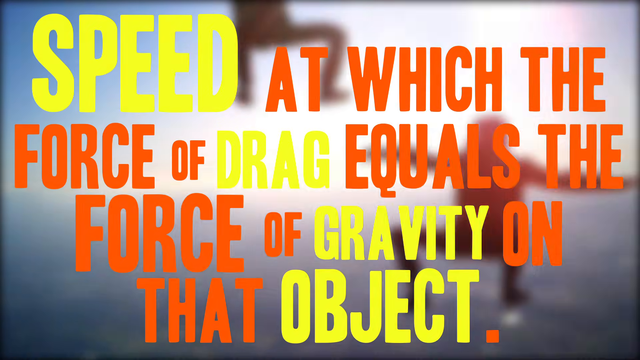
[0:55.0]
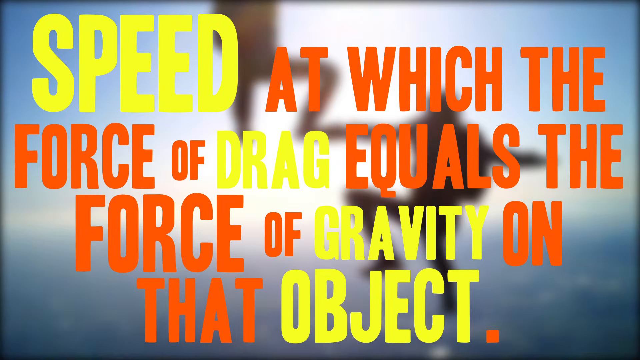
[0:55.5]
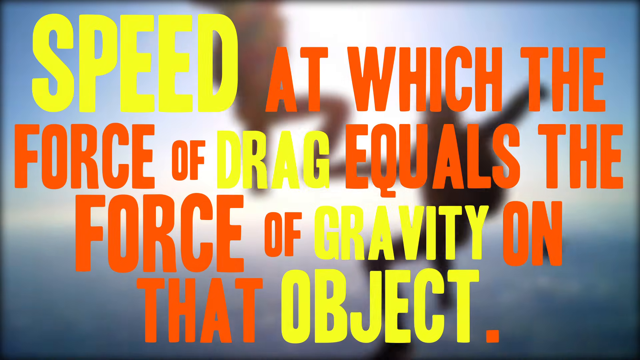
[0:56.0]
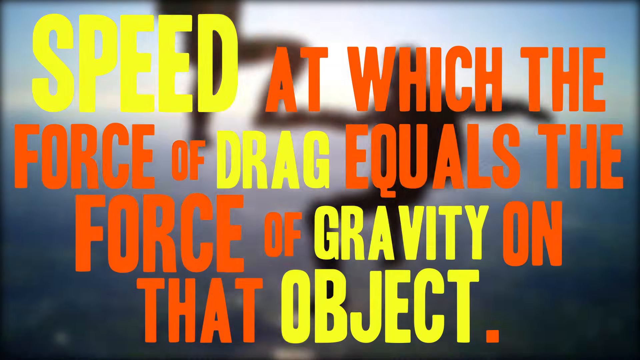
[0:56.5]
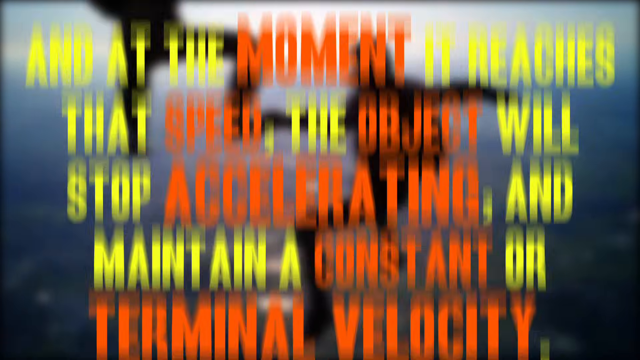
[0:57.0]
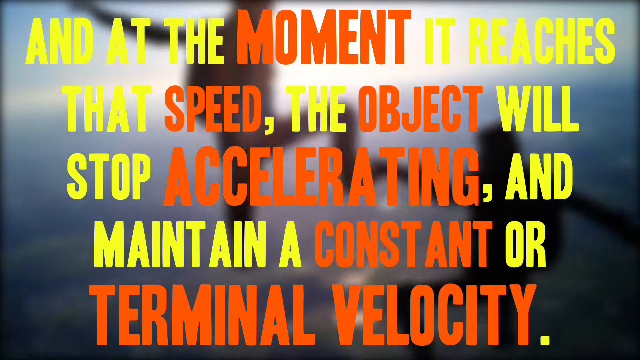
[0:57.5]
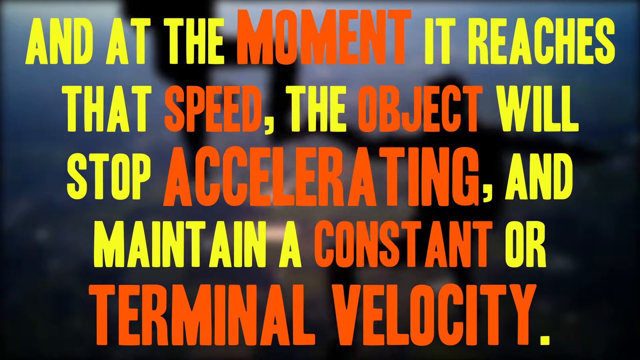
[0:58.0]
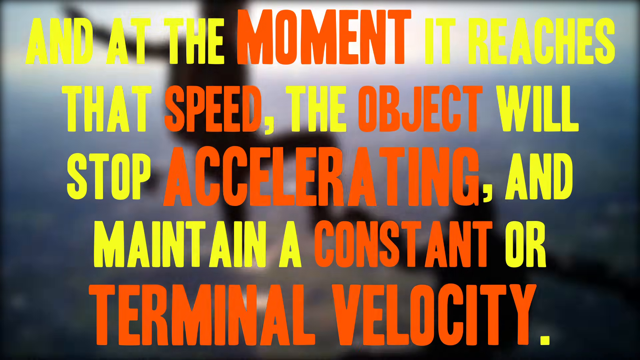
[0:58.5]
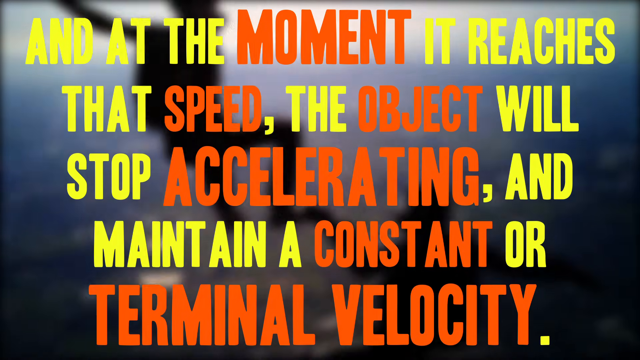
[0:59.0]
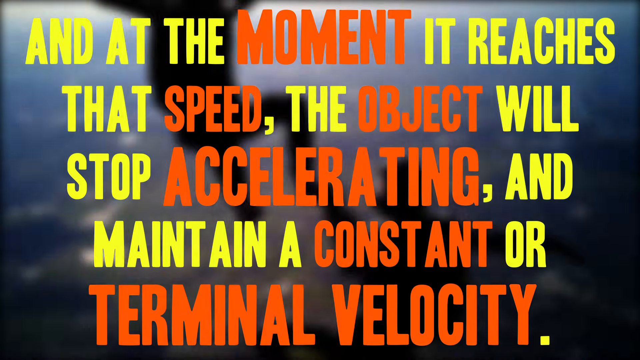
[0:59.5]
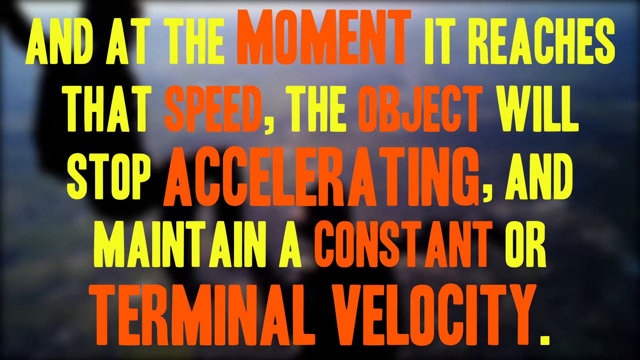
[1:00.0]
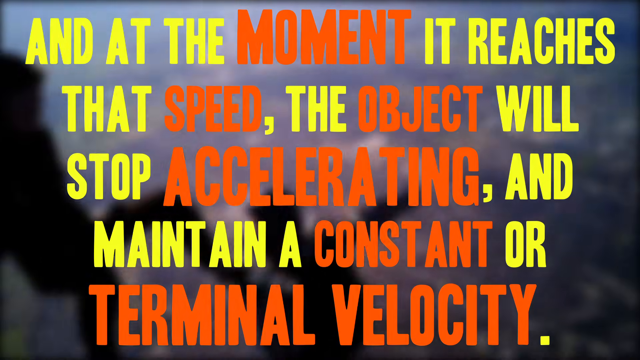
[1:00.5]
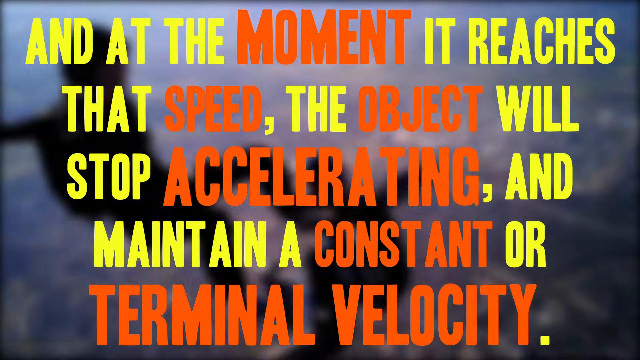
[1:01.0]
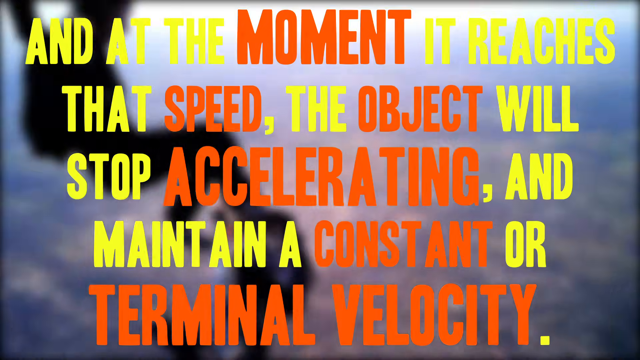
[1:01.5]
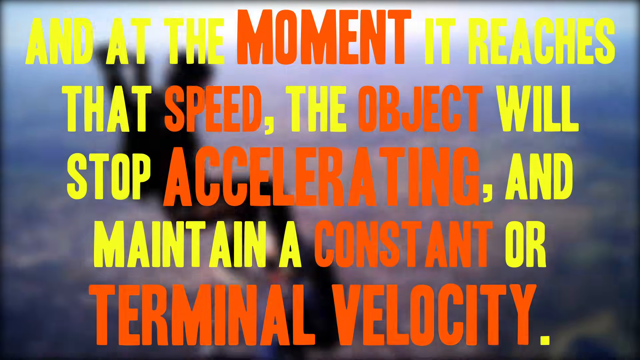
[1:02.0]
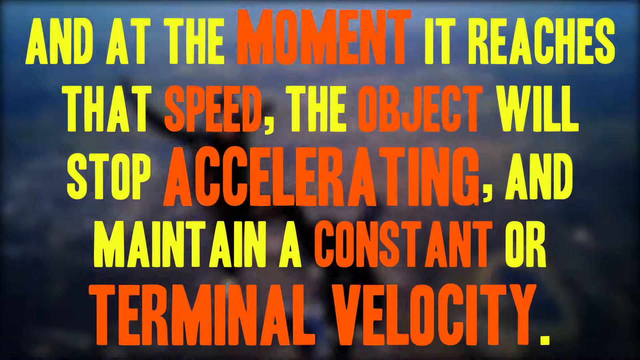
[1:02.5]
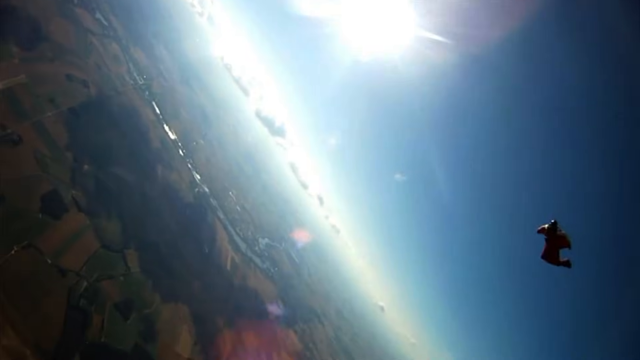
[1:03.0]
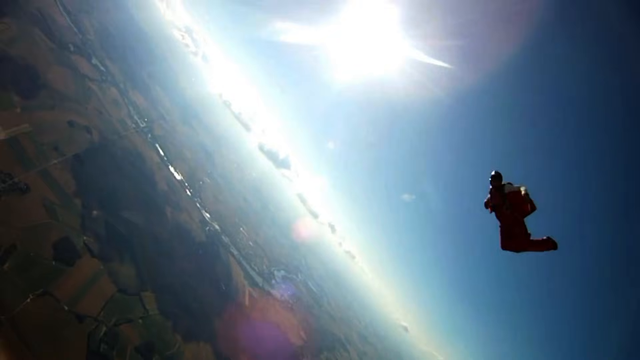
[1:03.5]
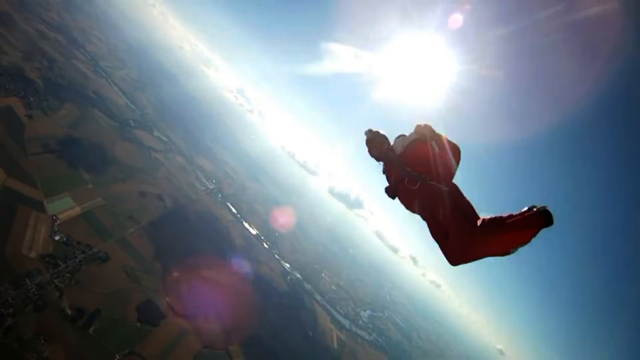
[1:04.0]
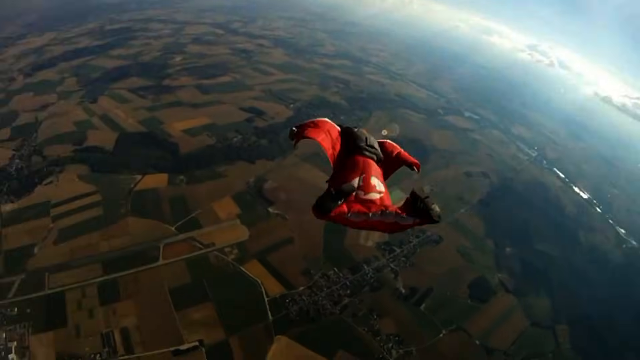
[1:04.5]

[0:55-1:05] A green logo reading "SciShow" is in the bottom right-hand corner. The background footage is all of skydivers: two fall kind of feet-first, grouped together, and one in a red wingsuit-style suit falls with arms spread out, seemingly catching drag and lifting back up a little. Very bold text, apparently yellow and red or yellow and orange, pops up on screen reading "speed at which the force of drag equals the force of gravity on that object." The next screen reads "and at the moment it reaches that speed, the object will stop accelerating and maintain a constant or terminal velocity."